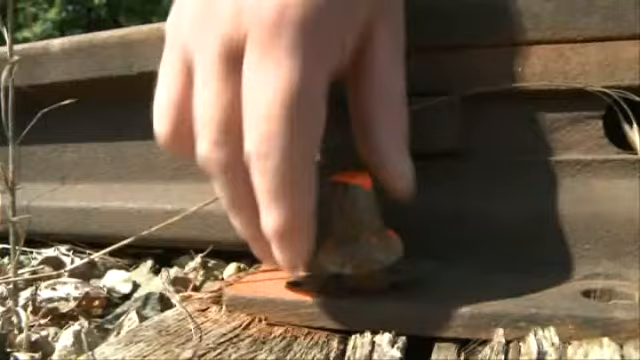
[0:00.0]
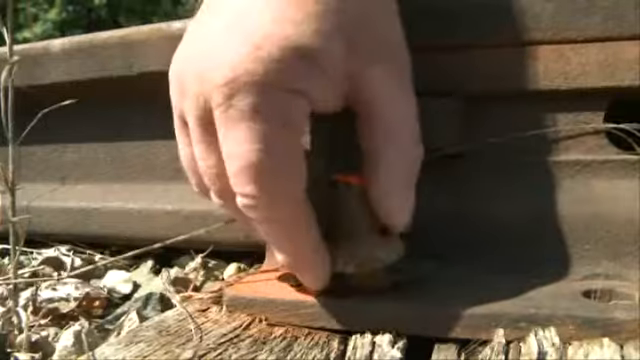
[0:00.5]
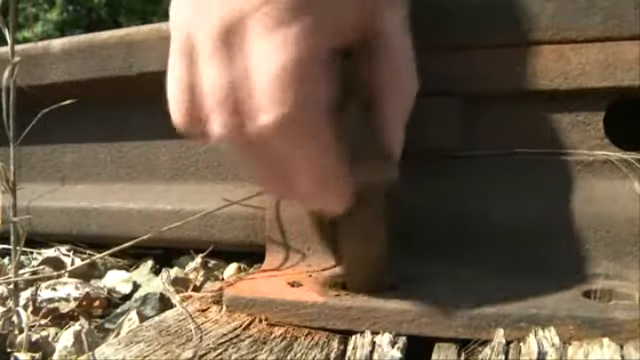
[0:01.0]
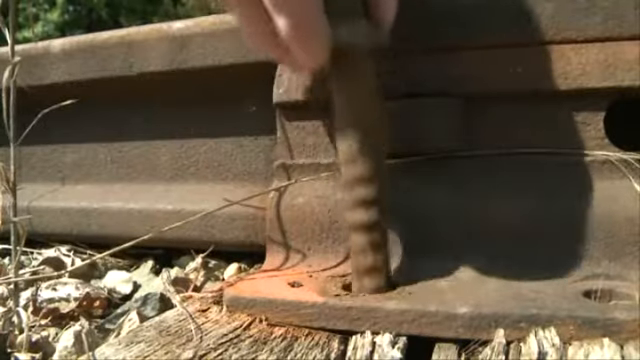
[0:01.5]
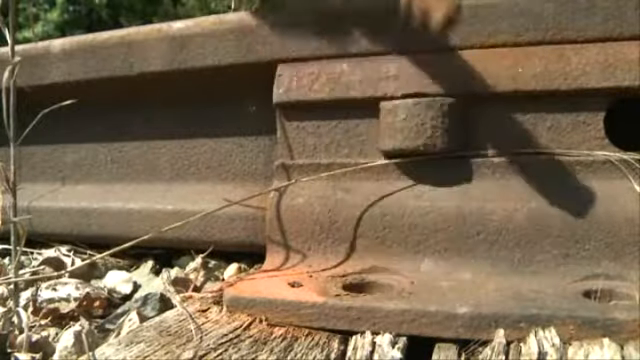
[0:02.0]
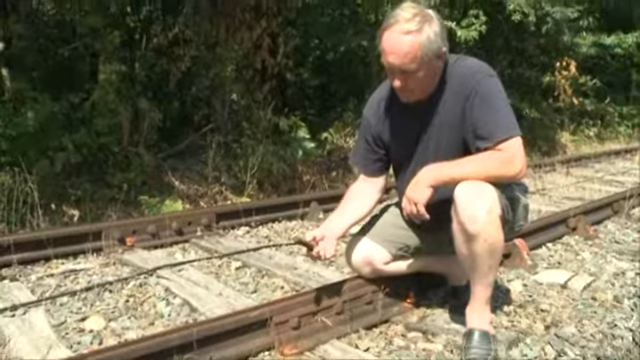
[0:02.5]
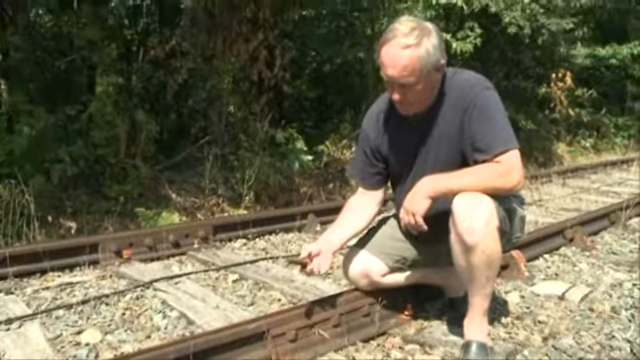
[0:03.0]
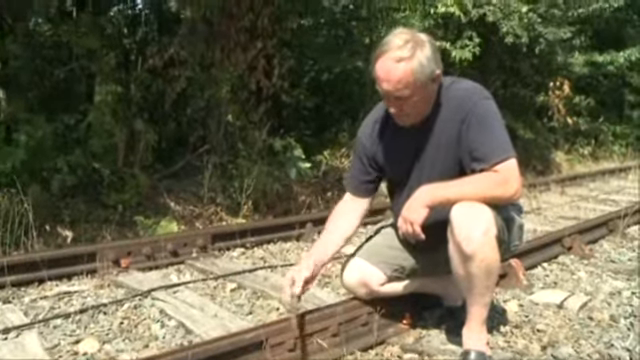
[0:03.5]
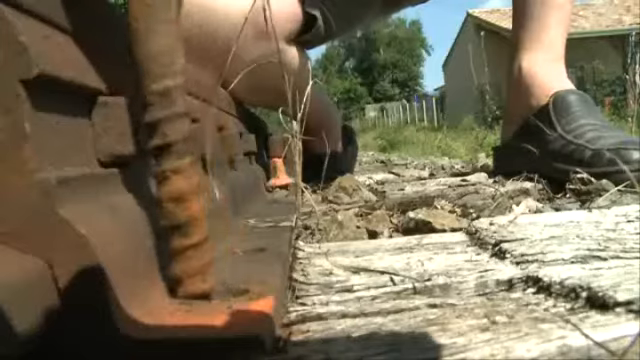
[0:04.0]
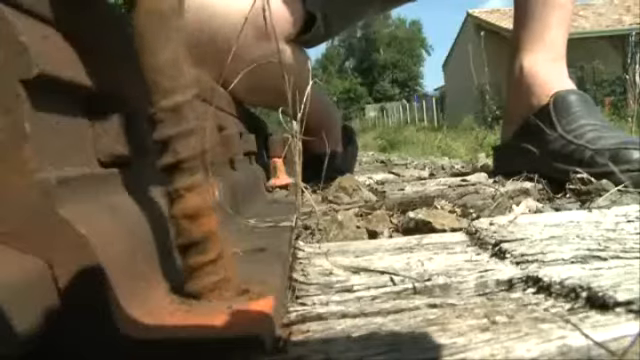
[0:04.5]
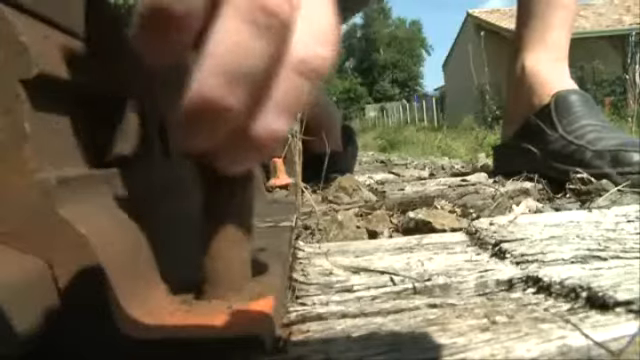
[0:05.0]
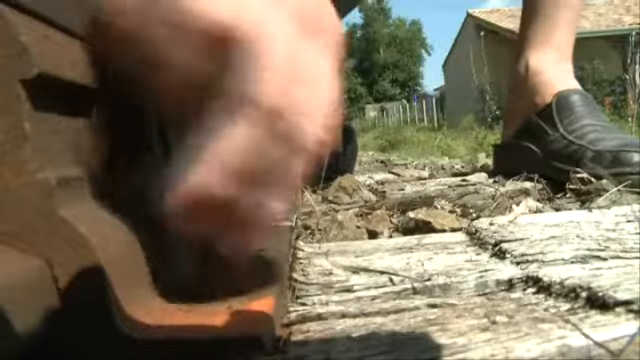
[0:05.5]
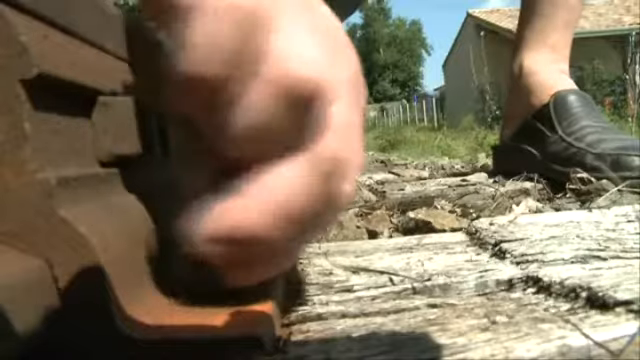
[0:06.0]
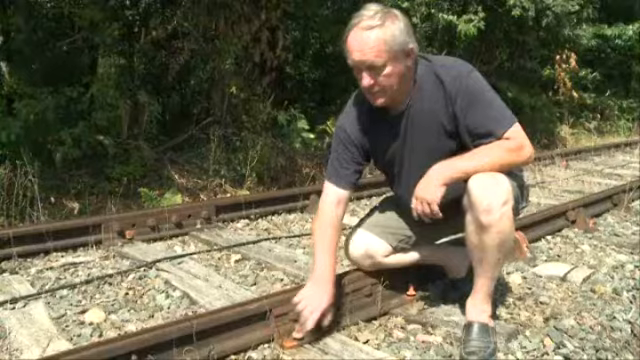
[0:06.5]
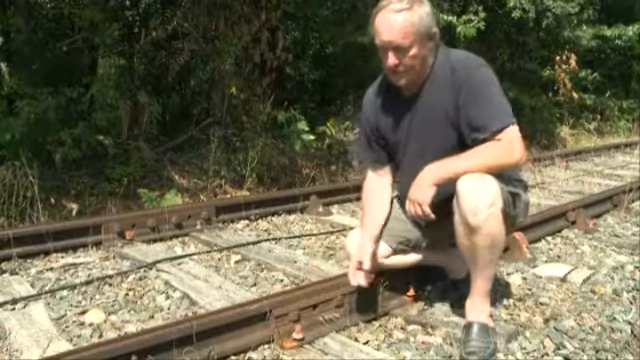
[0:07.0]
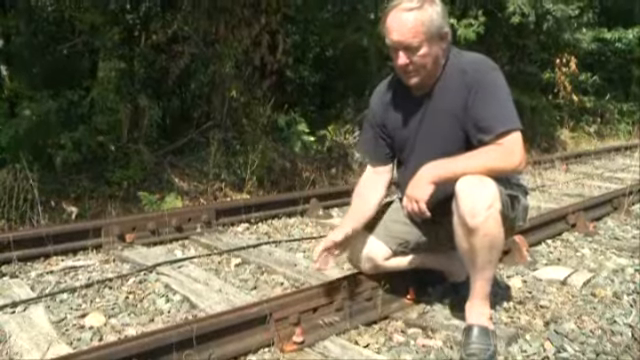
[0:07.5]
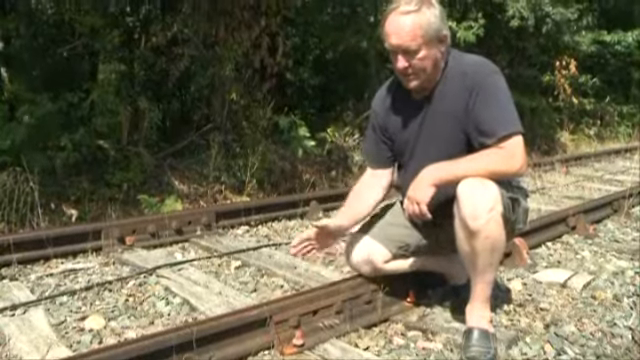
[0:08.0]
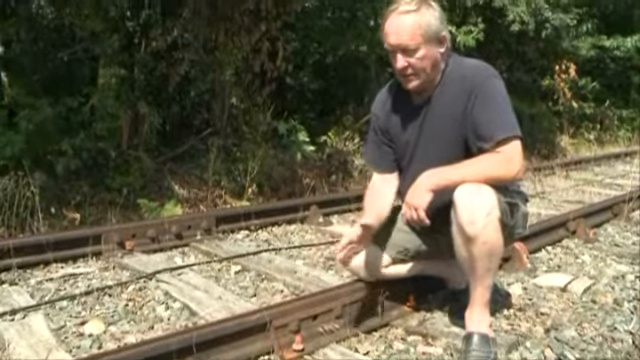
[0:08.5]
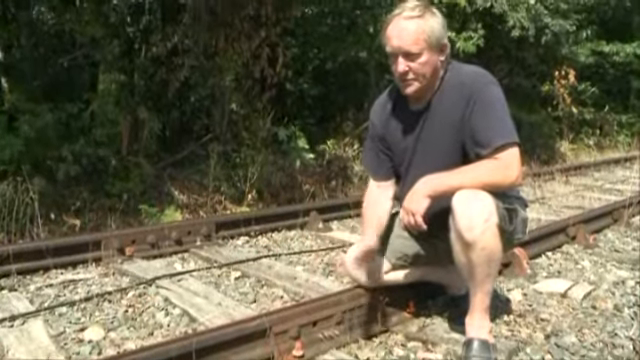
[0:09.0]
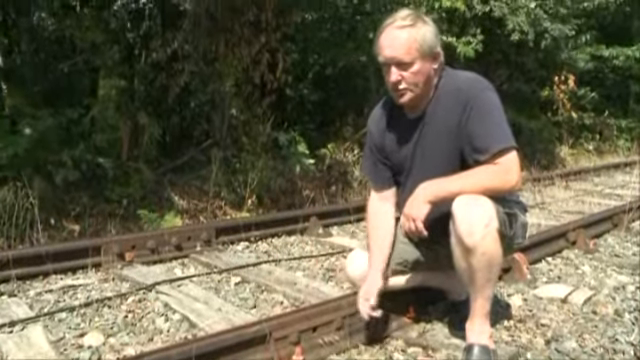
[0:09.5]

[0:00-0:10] A man's hand unscrews a screw from a railroad track. He apparently waves his hand back and forth, seemingly to show that the loose screws let the track move or possibly come out of place. In one scene a house is in the background, suggesting the railroad is next to a housing community. On the other side of the track there is a green forest line. The man is an older white man with gray hair, apparently in his late 60s, wearing green shorts, a faded black shirt, and black shoes.